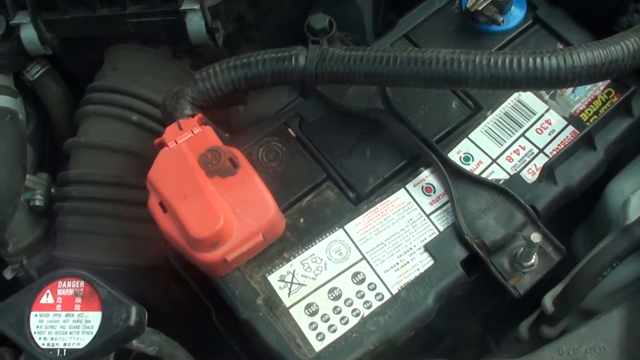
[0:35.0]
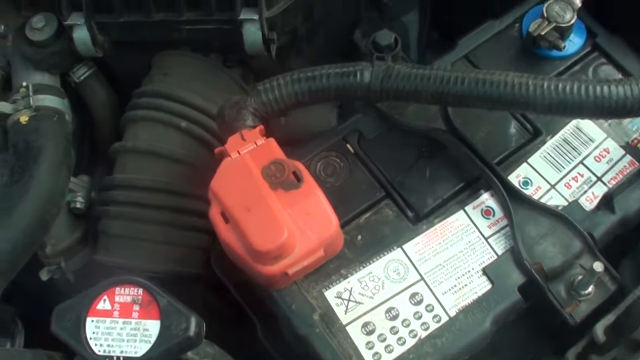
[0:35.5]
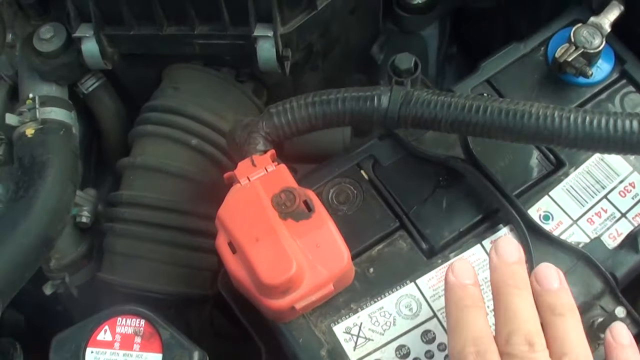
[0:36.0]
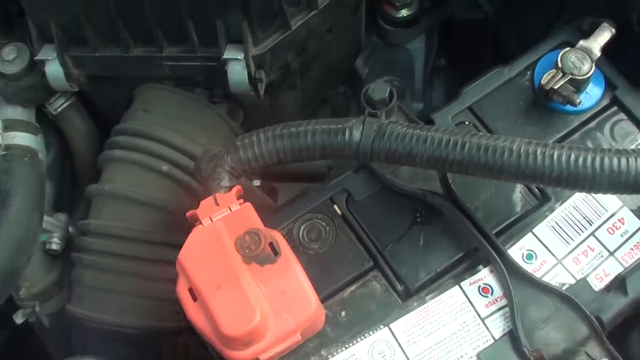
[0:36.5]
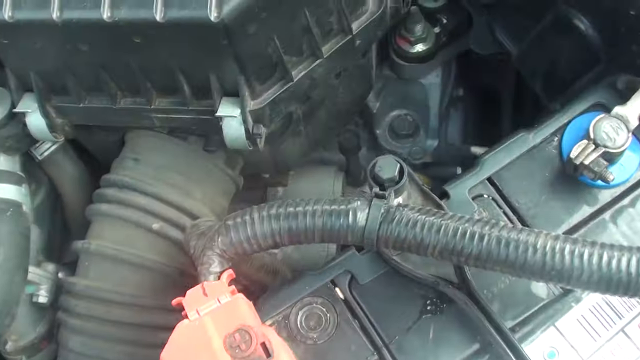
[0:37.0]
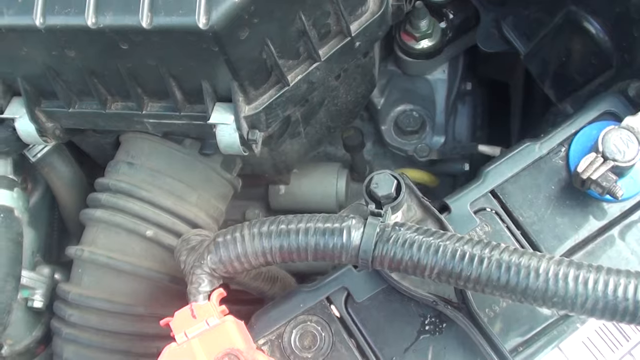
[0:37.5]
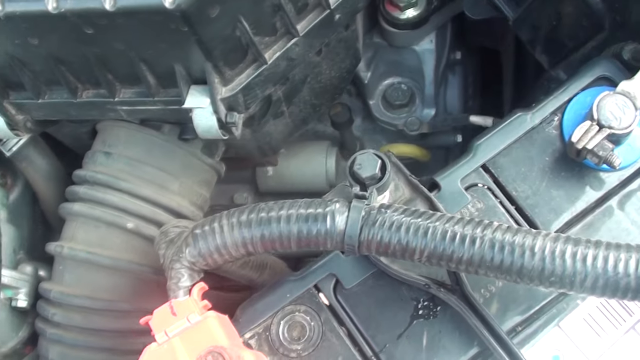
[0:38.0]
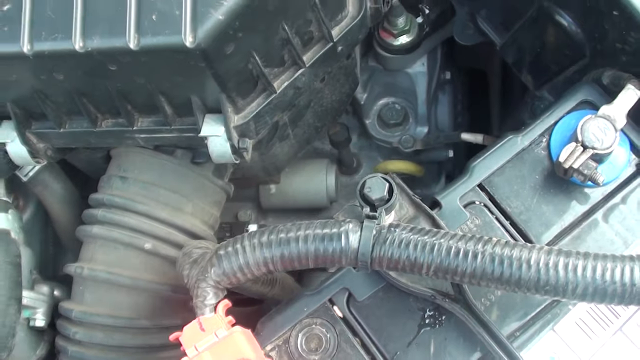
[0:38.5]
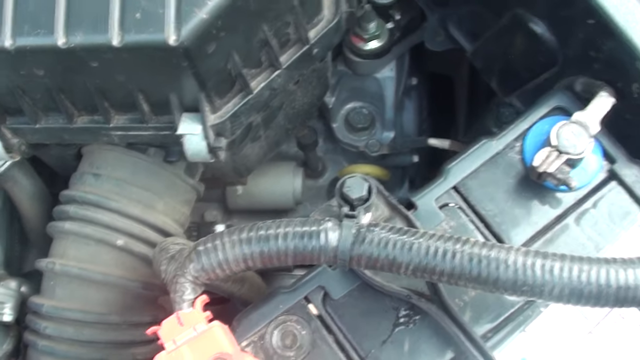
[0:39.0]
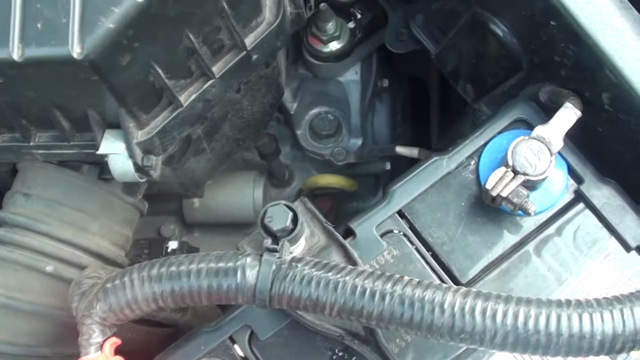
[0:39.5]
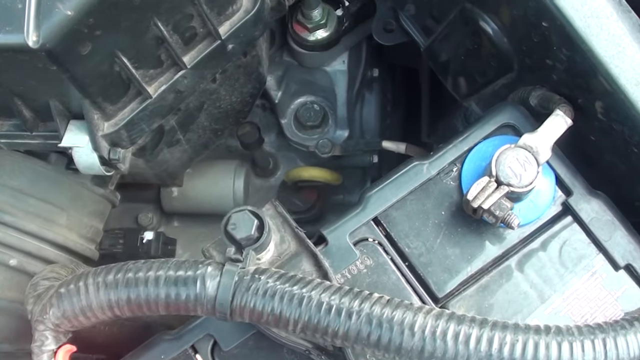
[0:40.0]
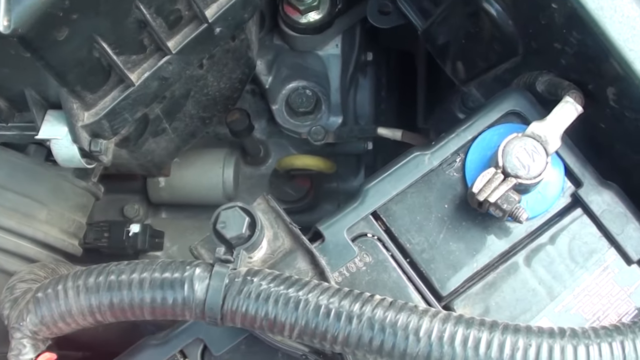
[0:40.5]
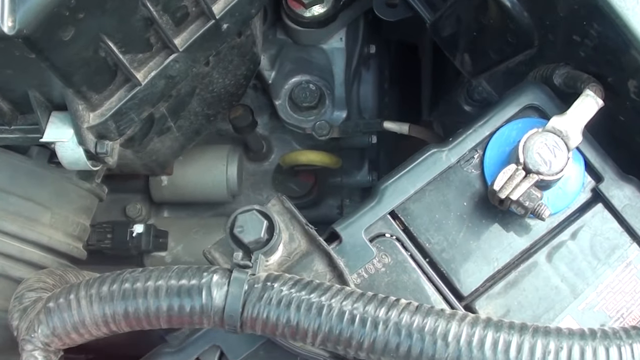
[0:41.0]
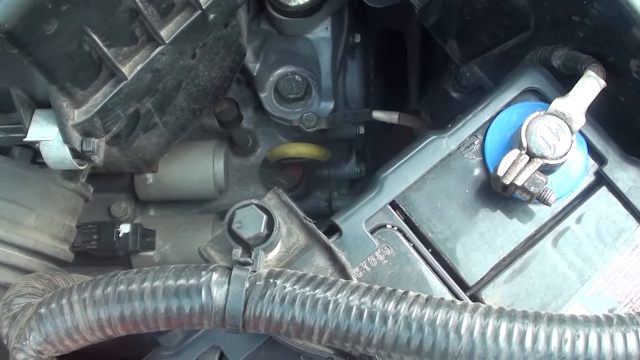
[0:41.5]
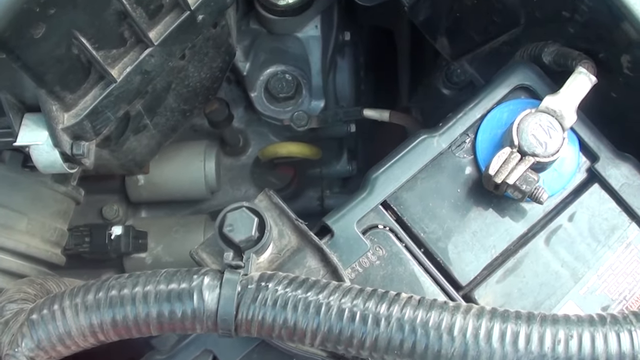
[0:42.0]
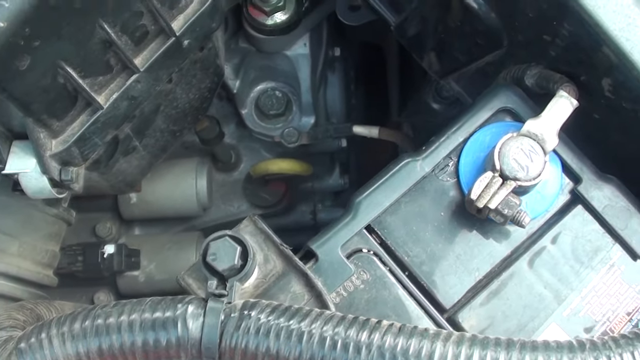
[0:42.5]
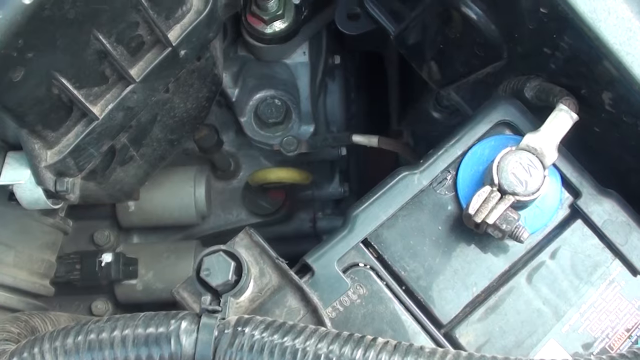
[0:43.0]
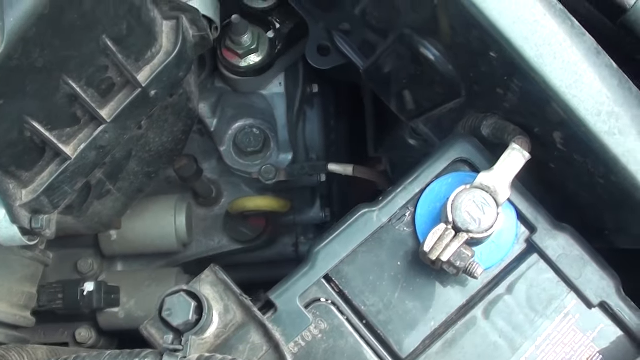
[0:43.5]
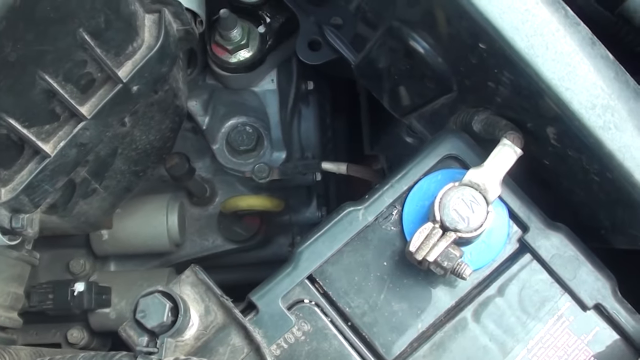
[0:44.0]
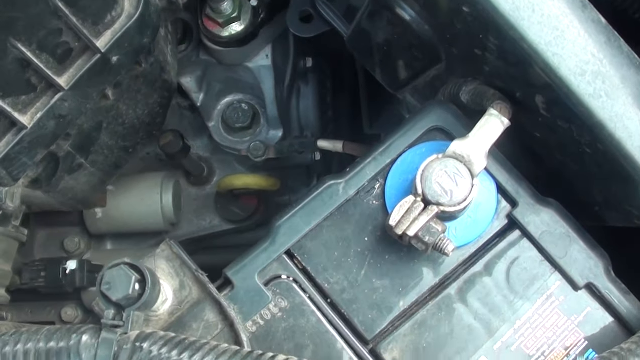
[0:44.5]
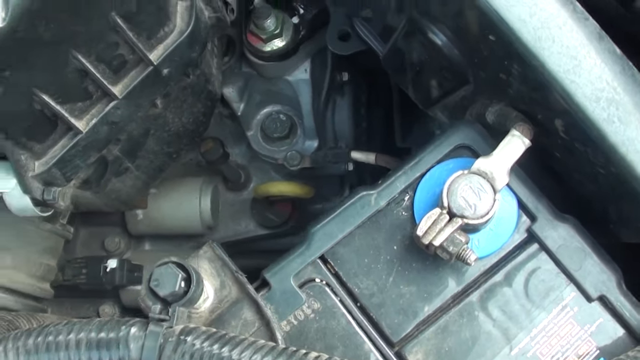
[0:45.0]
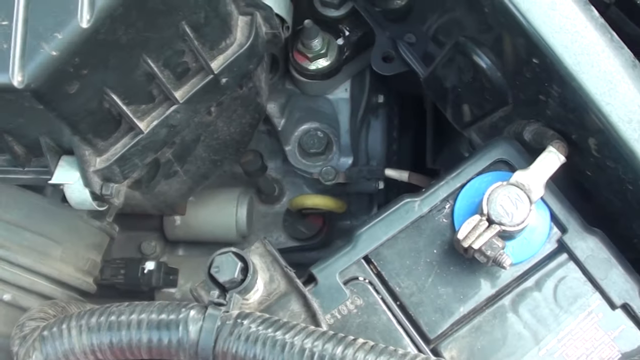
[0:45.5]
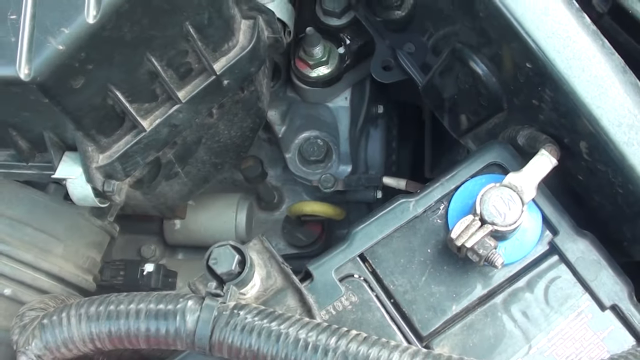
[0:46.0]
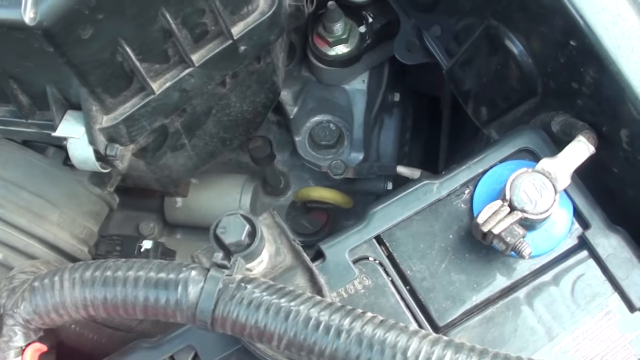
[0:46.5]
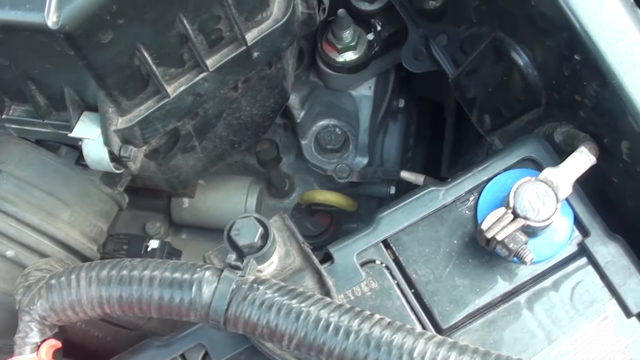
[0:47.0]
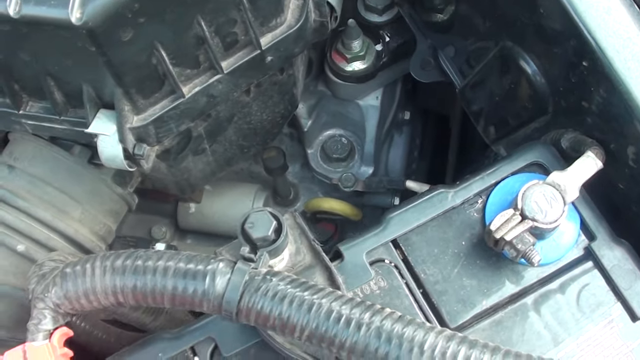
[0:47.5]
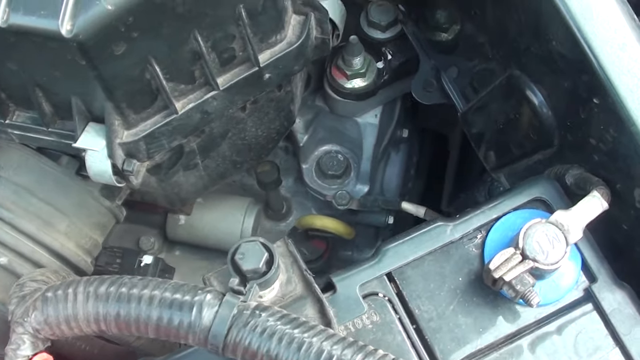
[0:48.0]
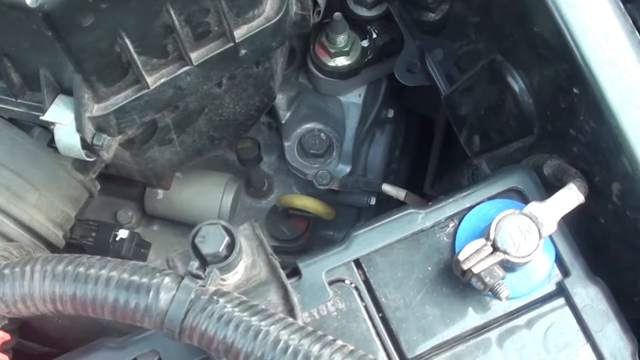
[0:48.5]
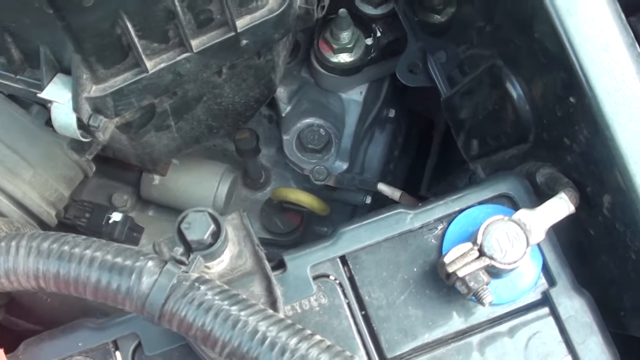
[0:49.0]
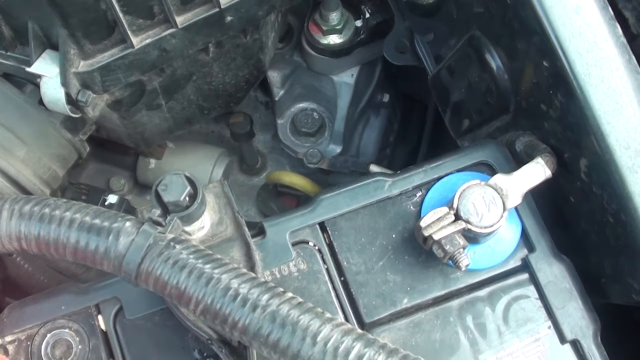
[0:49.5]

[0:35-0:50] Under the hood of a Honda Civic 2007, the camera is focused on the battery. A red clip is on the battery, with a black tube connecting it to the rest of the car, and there is some writing on the battery. A white hand appears, smacks the battery for a second, and touches it. The camera then zooms in to the right corner, where a silver piece, one of the battery's connectors, sticks out of the top of the battery with a blue circle underneath it; the view looks directly down on that connector from overhead. Behind the battery is some sort of greenish or yellow handle down near the bottom, and more tubing is visible on the left side. The battery is black with some tubes on top. The red connector is connected, and there appears to be another connector that is not connected, unless both are connected to the black tube with the red cap.